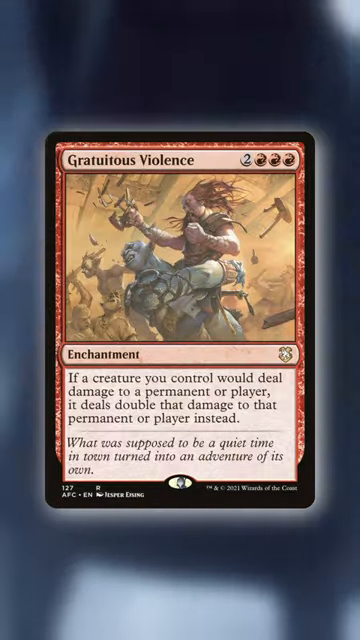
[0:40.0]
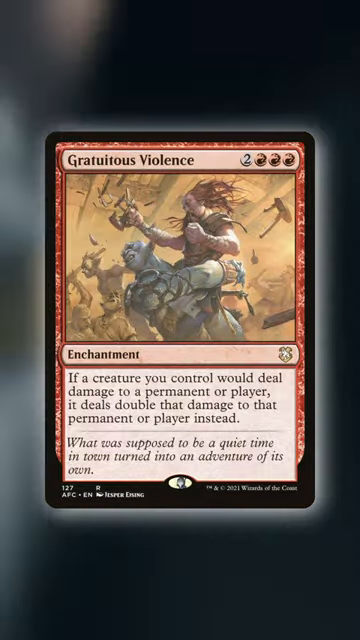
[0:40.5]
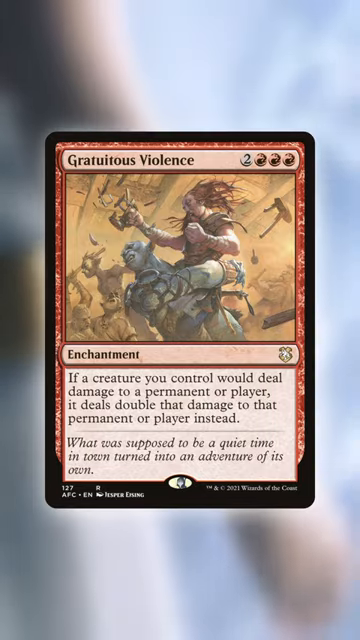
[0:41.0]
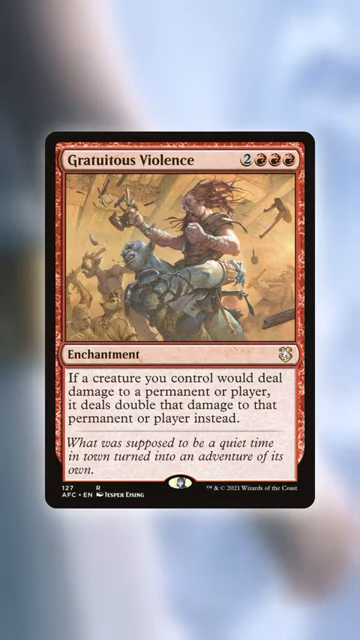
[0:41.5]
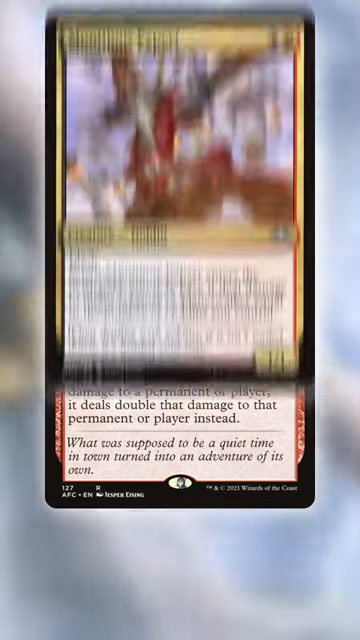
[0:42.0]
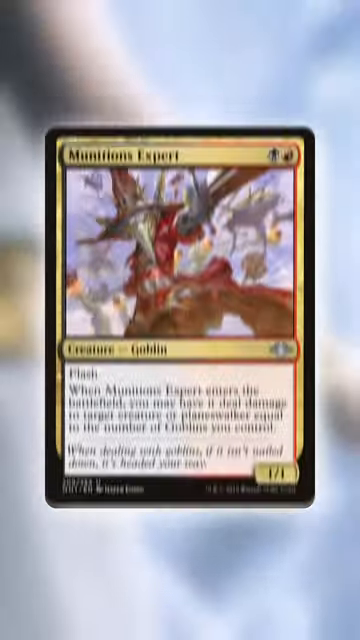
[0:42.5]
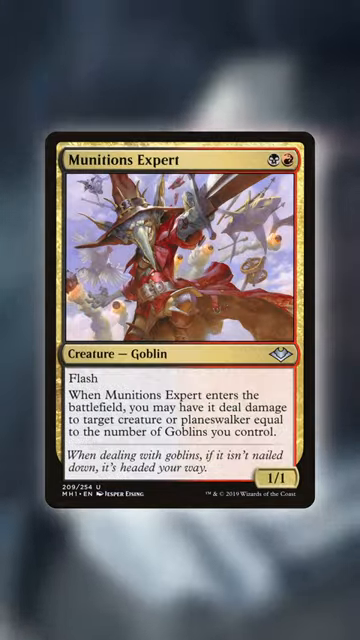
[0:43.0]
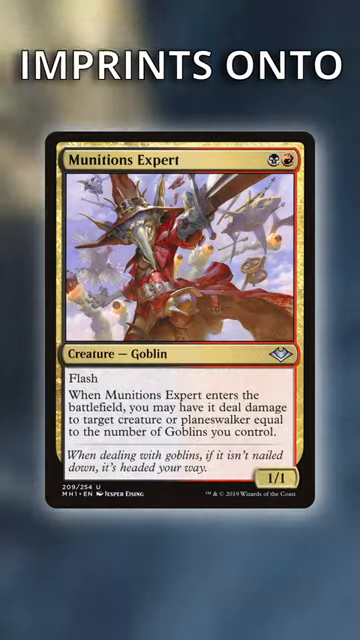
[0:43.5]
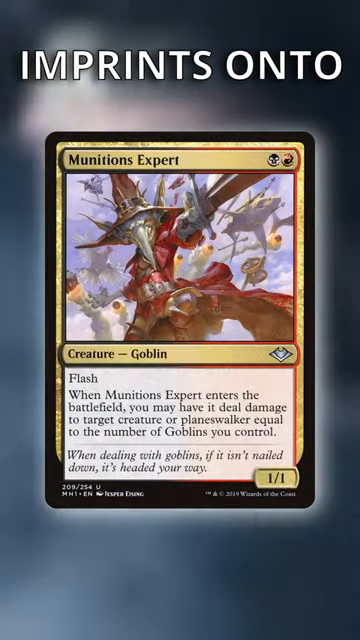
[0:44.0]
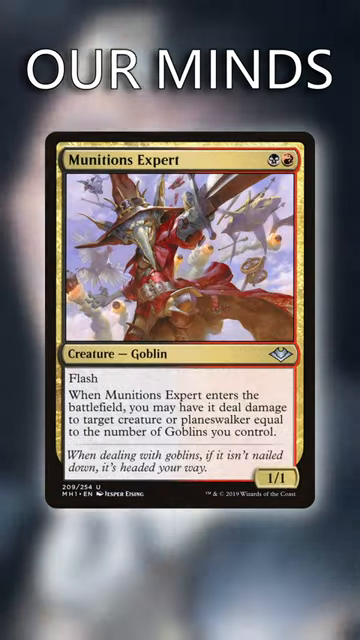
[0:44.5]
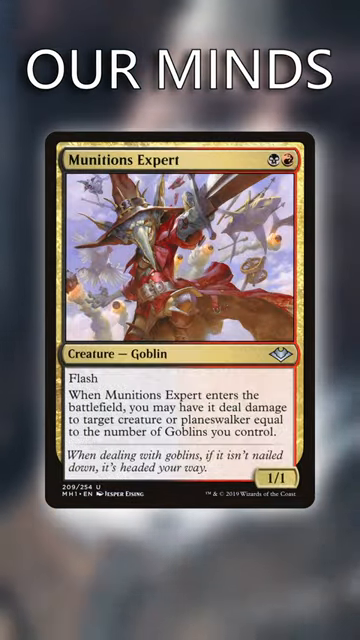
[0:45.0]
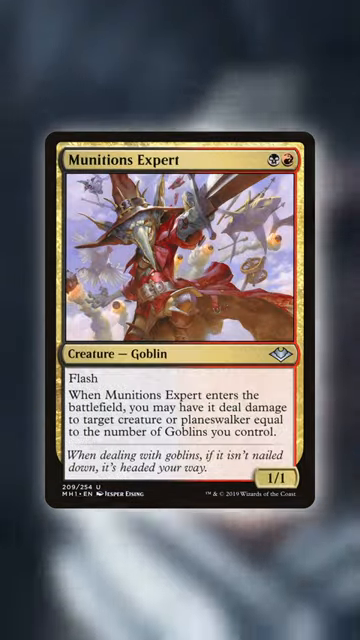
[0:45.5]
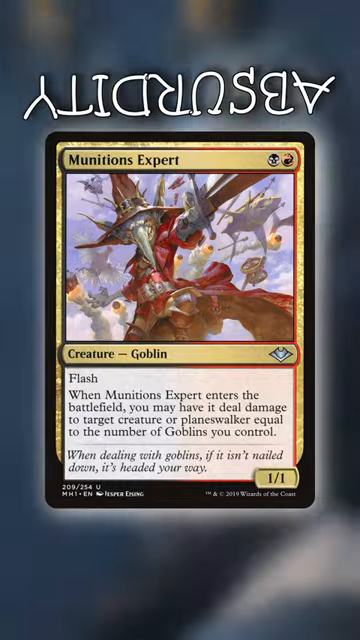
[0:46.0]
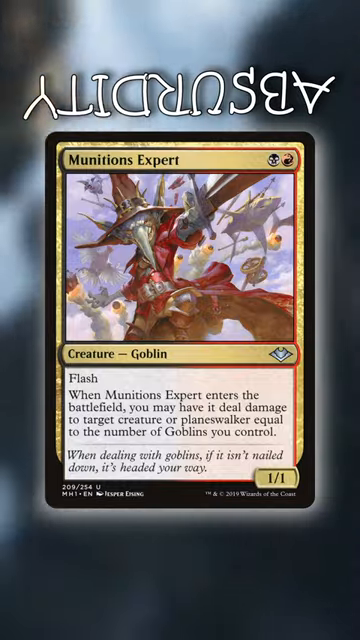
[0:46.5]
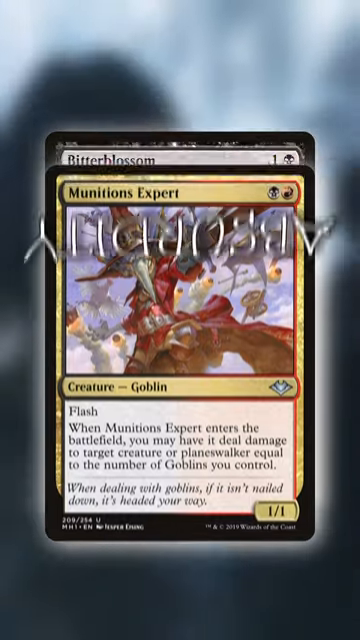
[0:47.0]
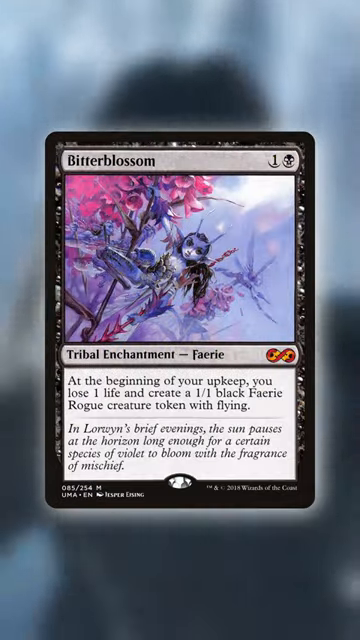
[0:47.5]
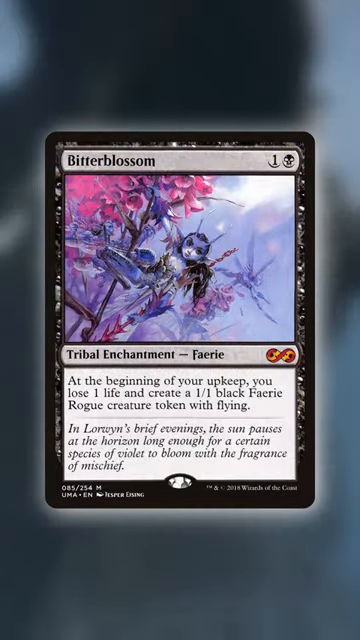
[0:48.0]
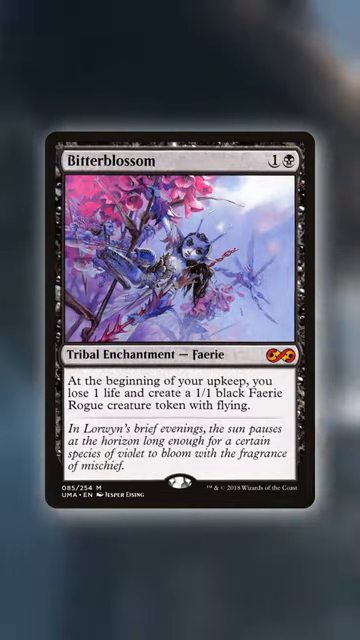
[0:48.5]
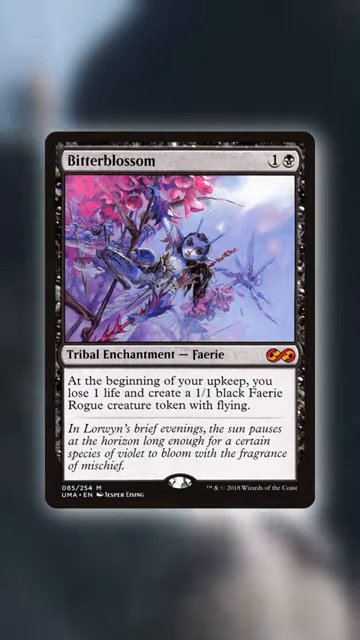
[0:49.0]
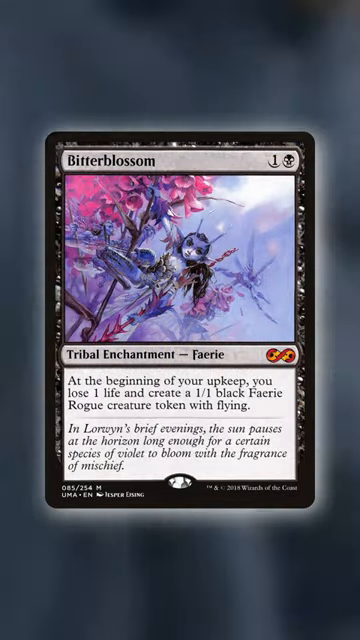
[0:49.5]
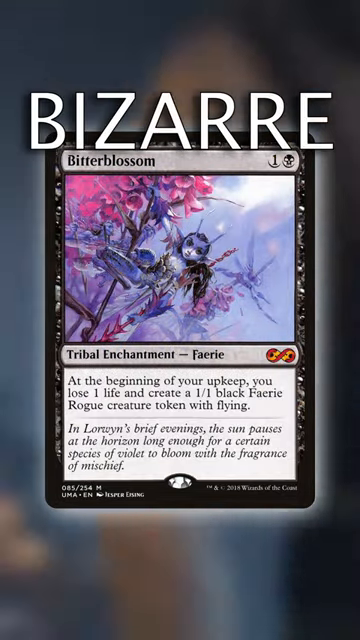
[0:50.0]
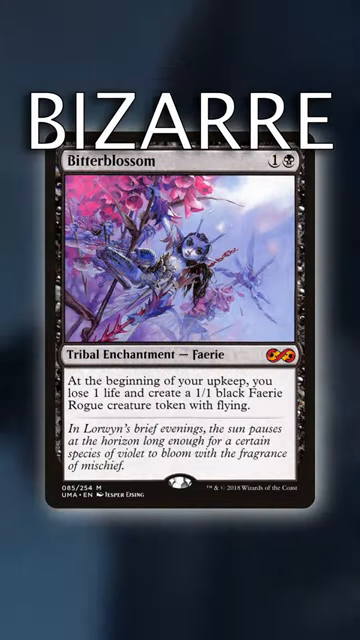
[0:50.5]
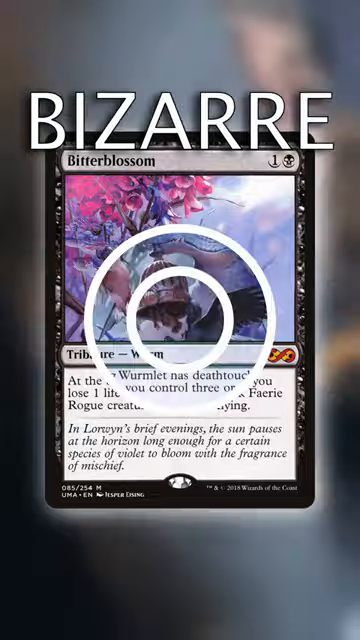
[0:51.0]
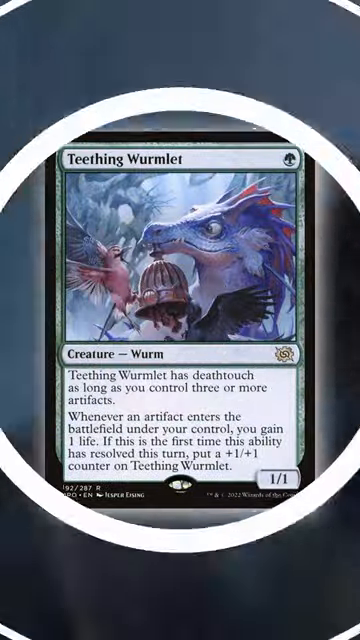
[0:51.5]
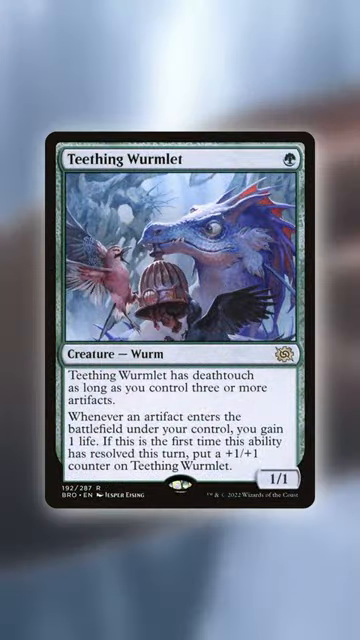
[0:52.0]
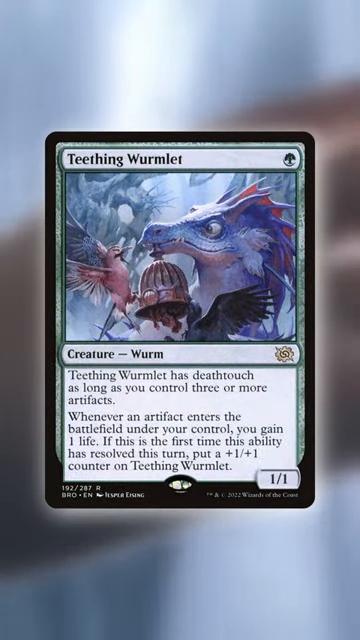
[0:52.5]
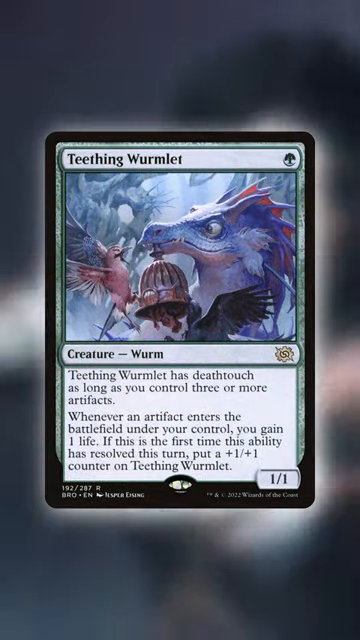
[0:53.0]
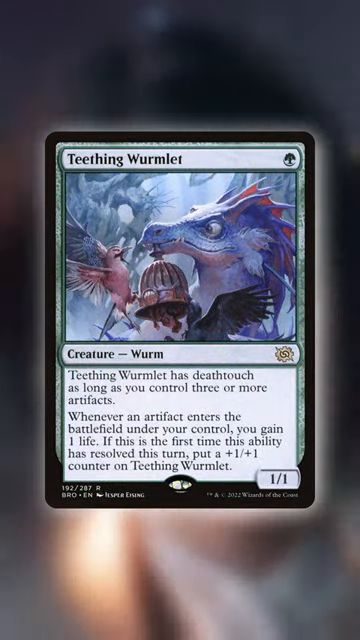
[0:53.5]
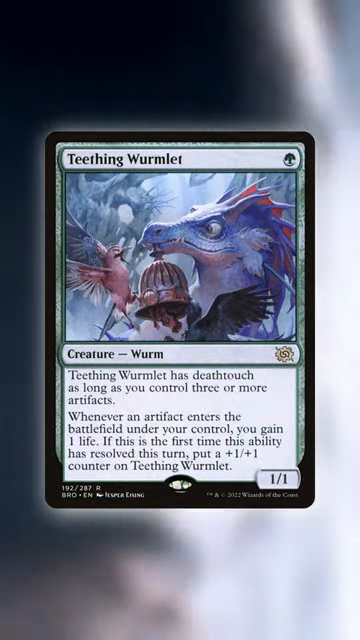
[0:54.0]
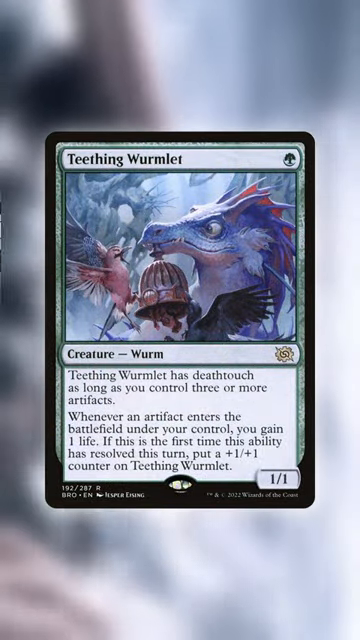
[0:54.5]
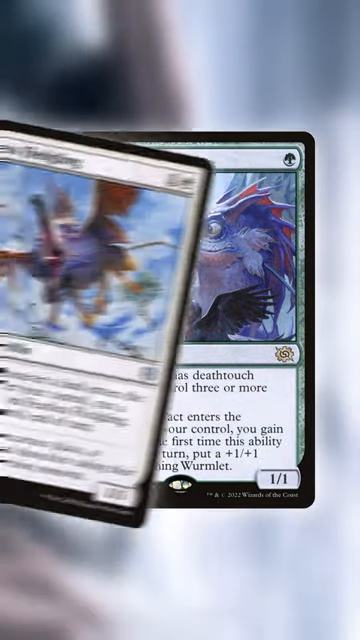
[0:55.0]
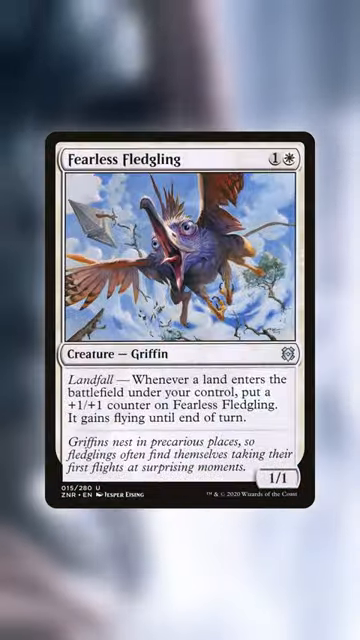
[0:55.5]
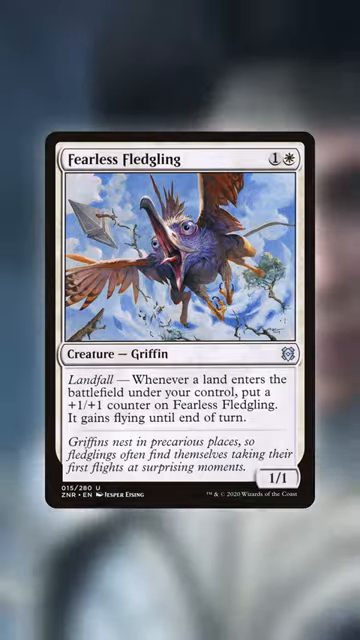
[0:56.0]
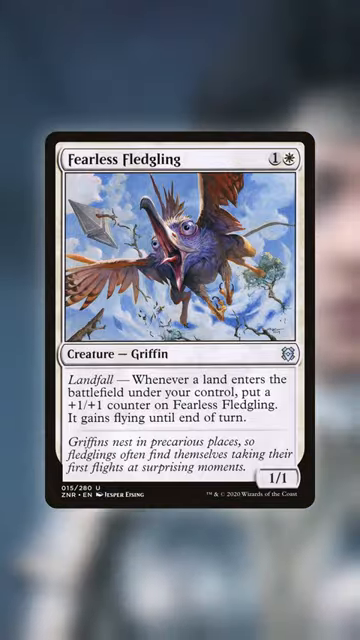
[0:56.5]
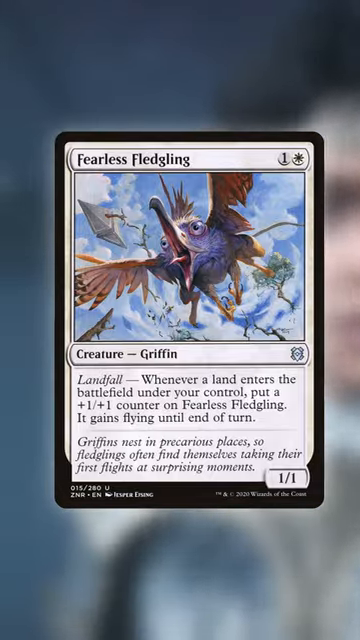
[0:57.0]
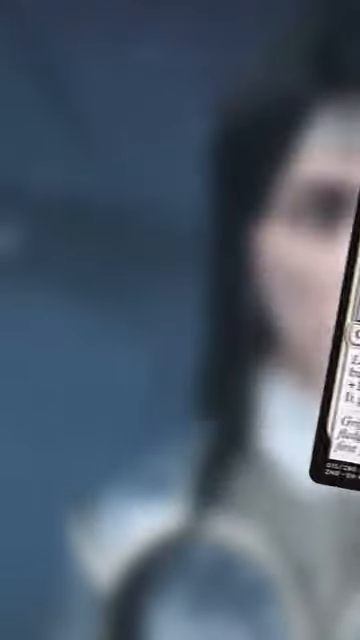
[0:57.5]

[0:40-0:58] Another goblin creature appears with a short description; it has a sword. Next is Bitter Blossom, which appears to represent a female, with a description of her. Then another character card, Teething Wormult, is shown. The video then goes back to a card seen before, Fearless Fledging. Each card shows a character and a description of what it is and what it does.